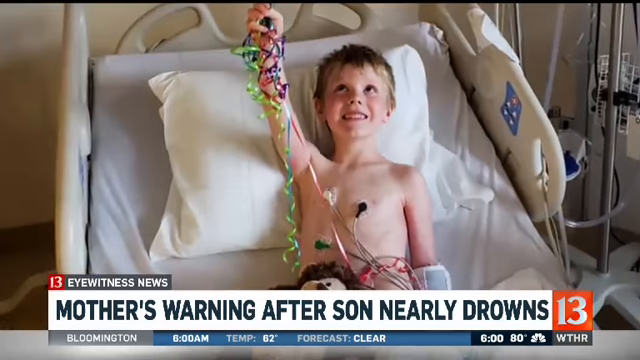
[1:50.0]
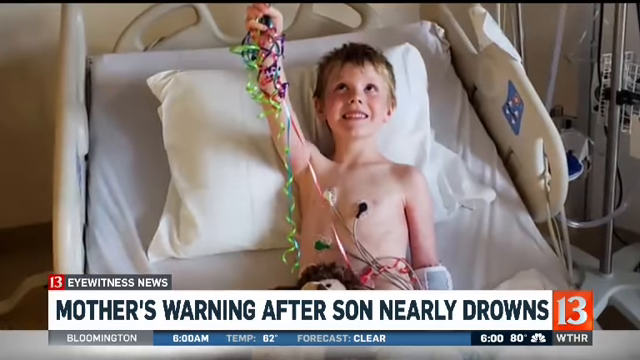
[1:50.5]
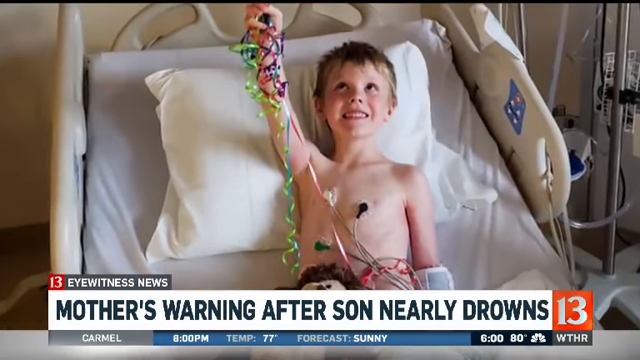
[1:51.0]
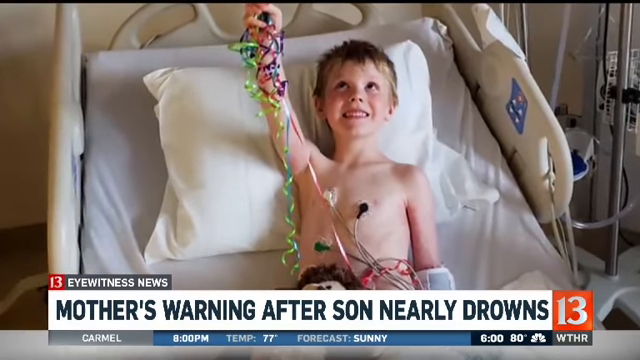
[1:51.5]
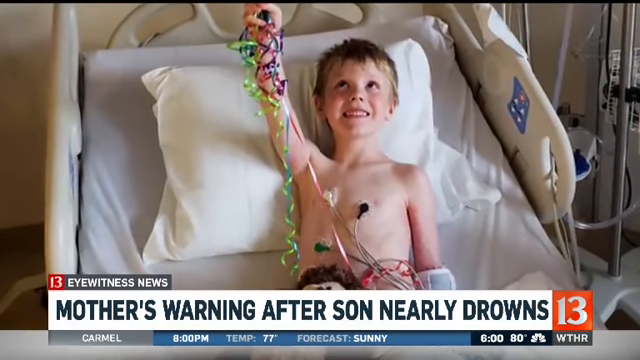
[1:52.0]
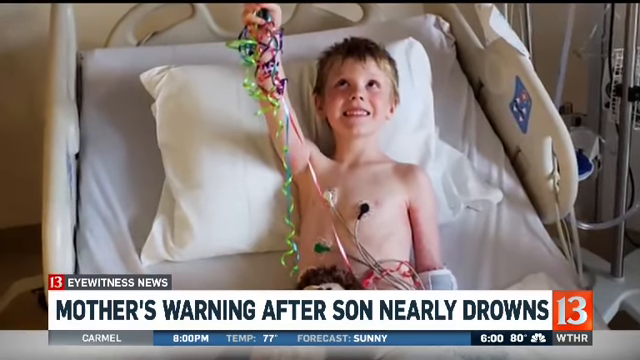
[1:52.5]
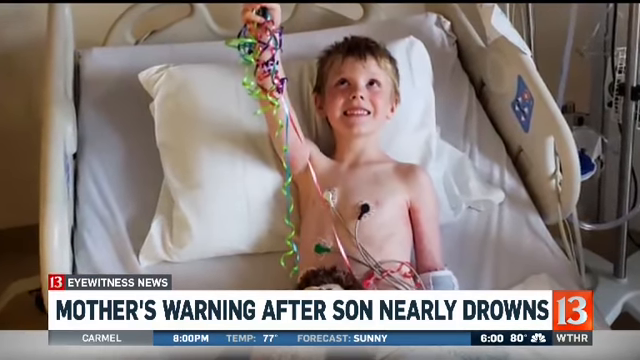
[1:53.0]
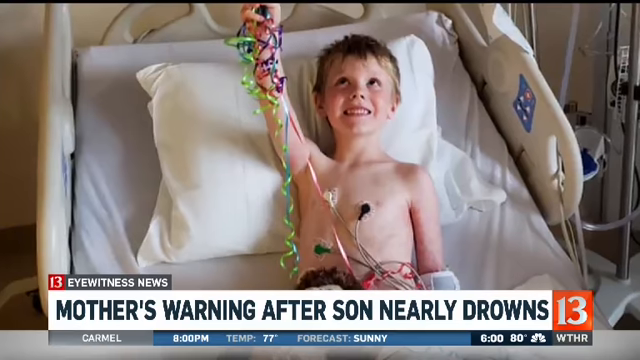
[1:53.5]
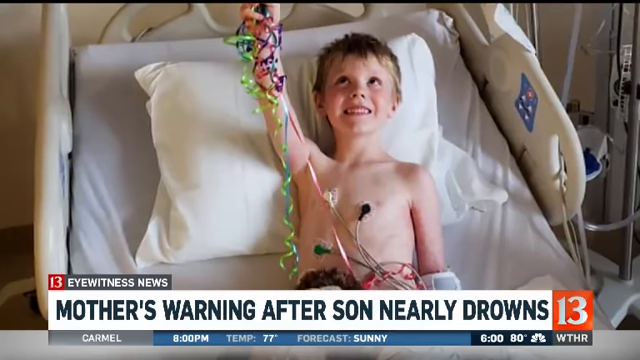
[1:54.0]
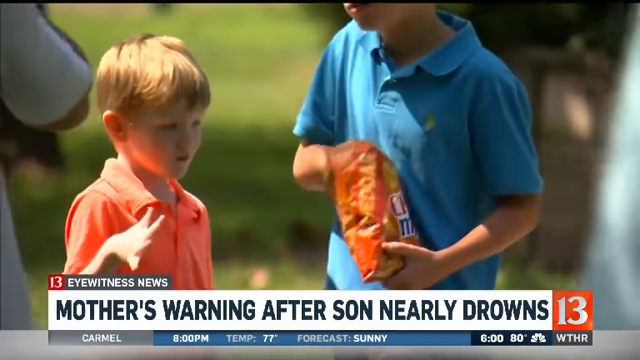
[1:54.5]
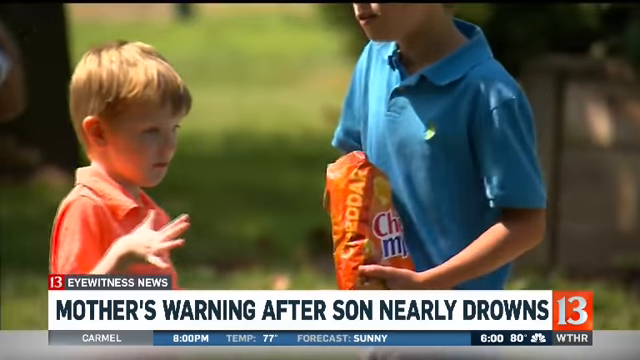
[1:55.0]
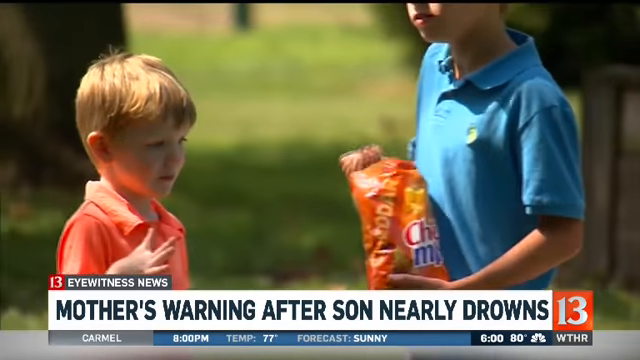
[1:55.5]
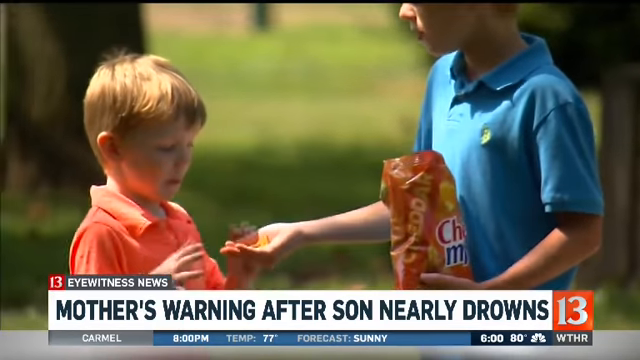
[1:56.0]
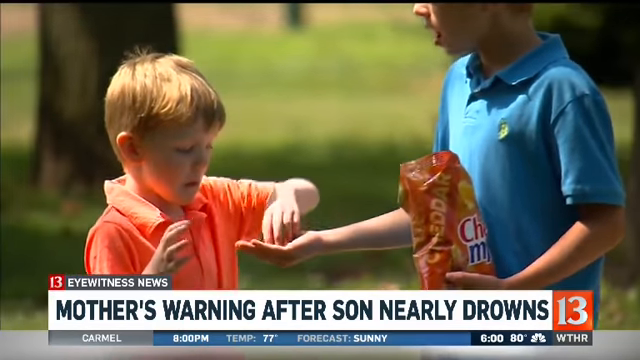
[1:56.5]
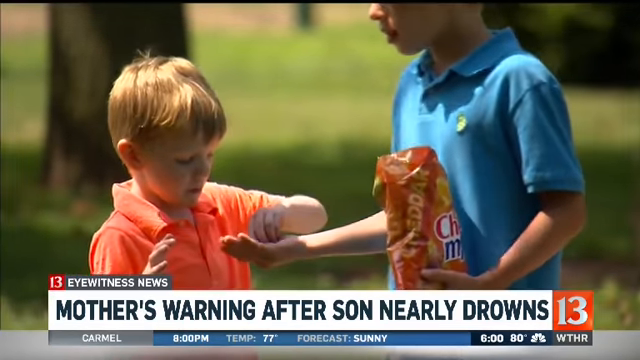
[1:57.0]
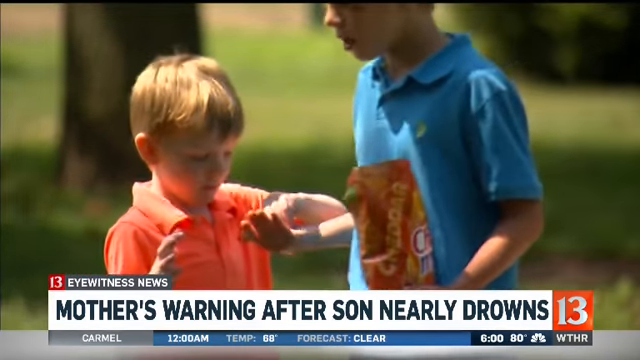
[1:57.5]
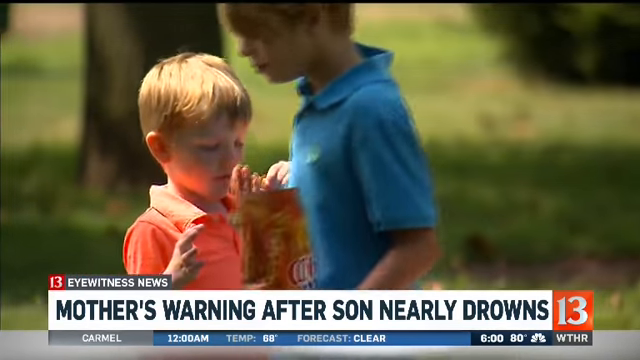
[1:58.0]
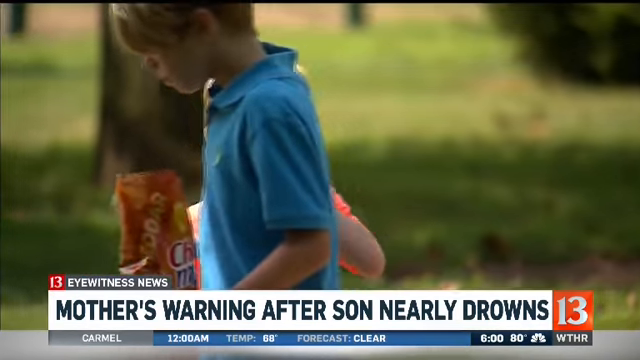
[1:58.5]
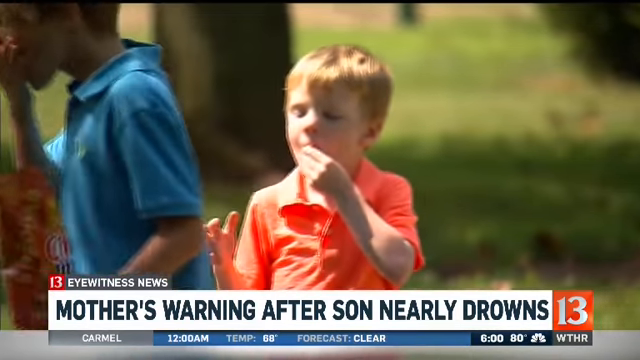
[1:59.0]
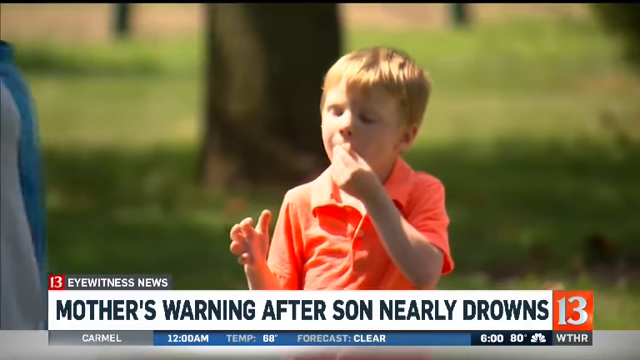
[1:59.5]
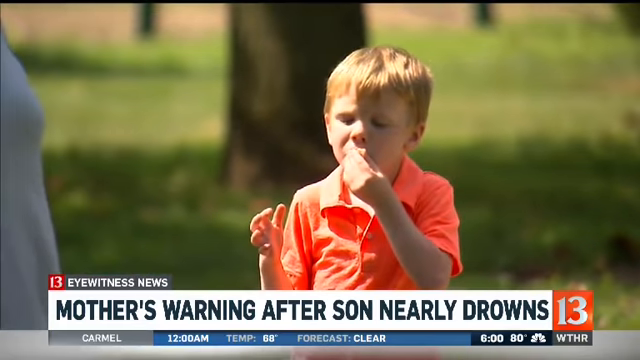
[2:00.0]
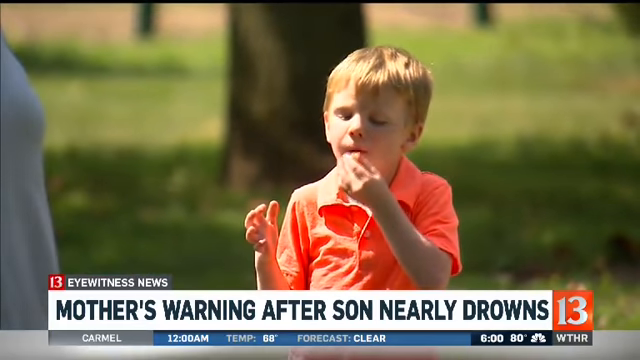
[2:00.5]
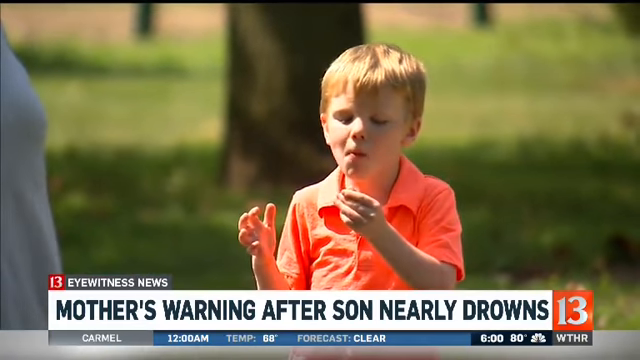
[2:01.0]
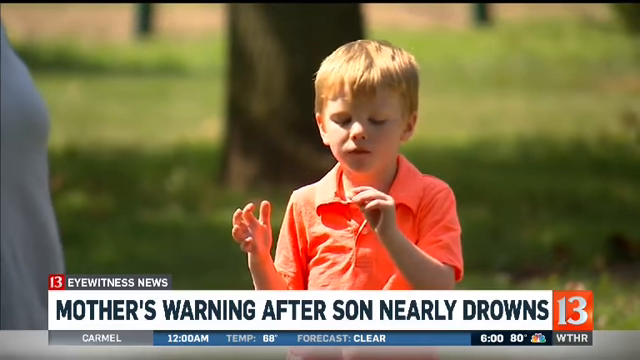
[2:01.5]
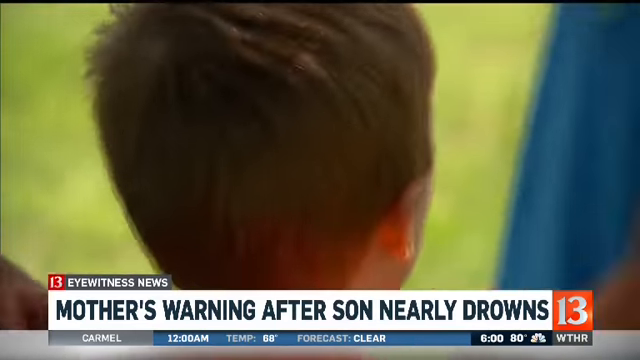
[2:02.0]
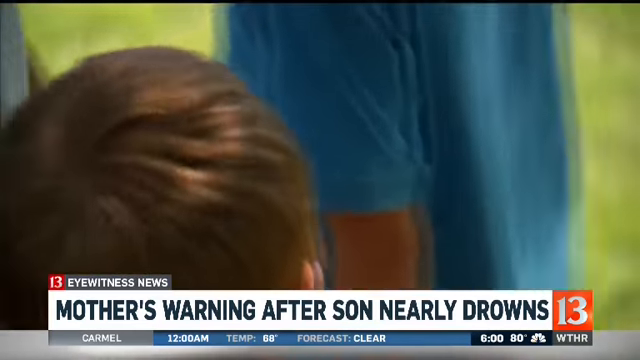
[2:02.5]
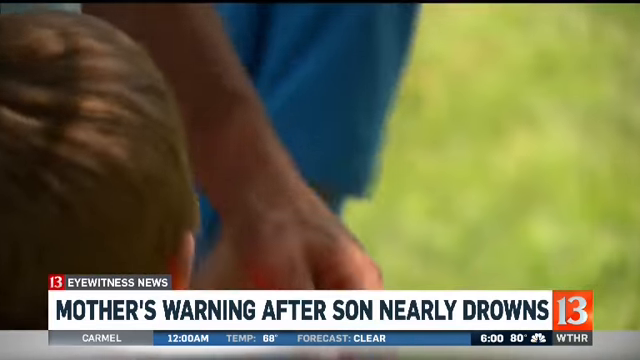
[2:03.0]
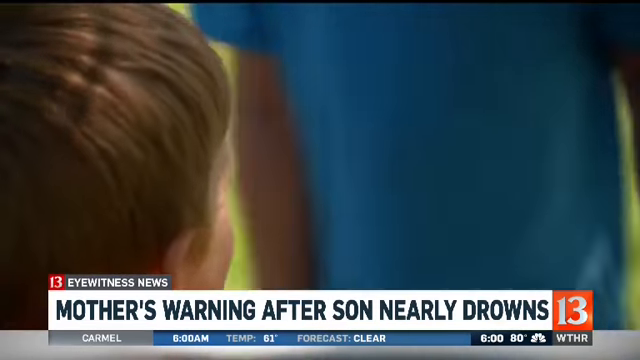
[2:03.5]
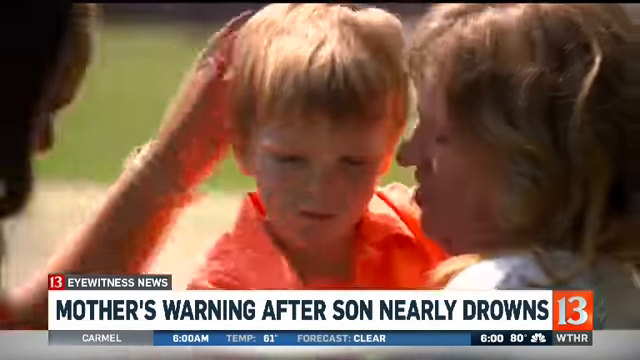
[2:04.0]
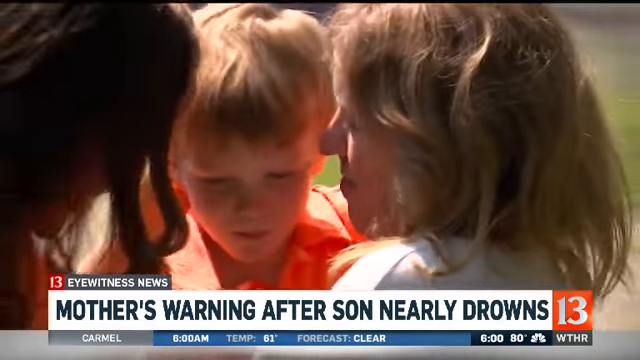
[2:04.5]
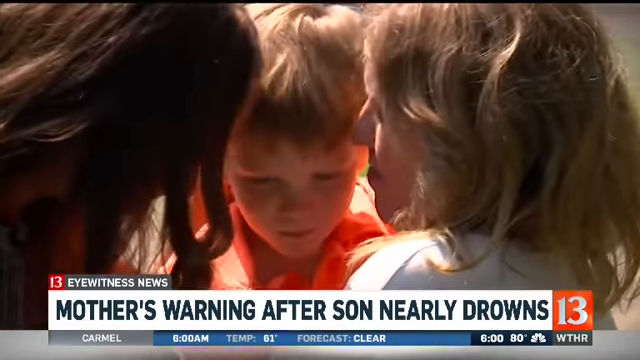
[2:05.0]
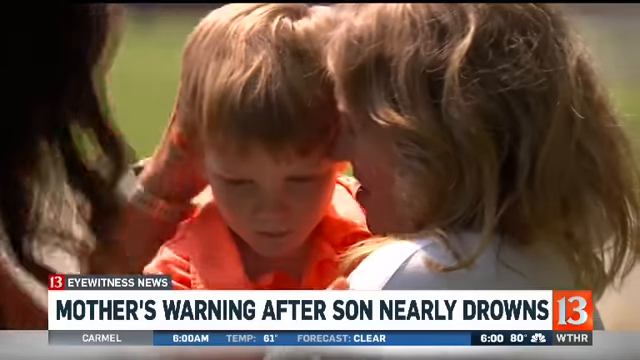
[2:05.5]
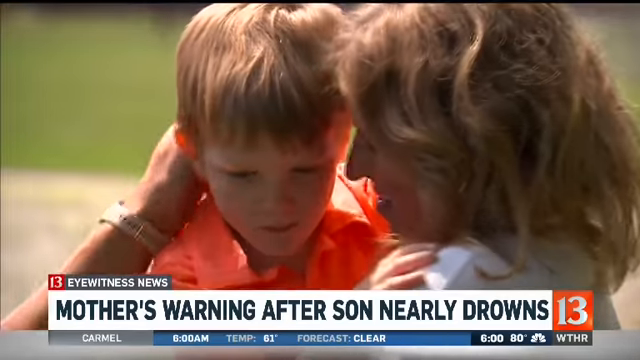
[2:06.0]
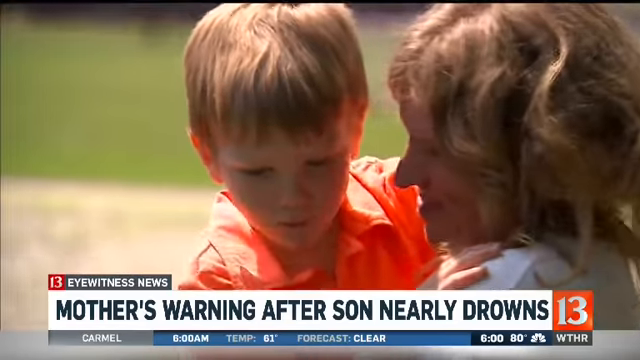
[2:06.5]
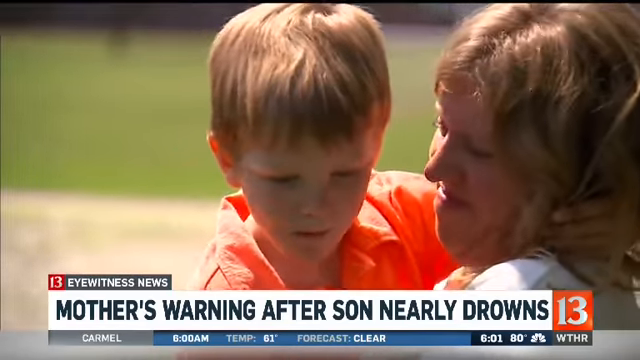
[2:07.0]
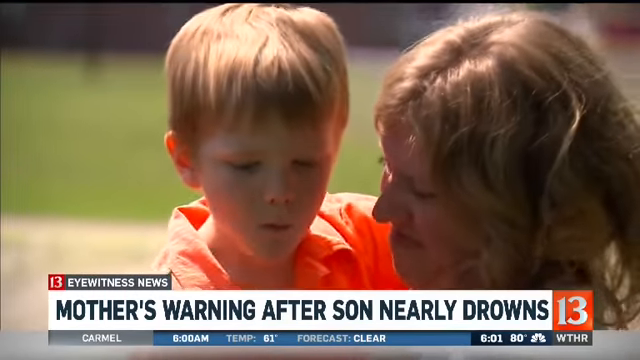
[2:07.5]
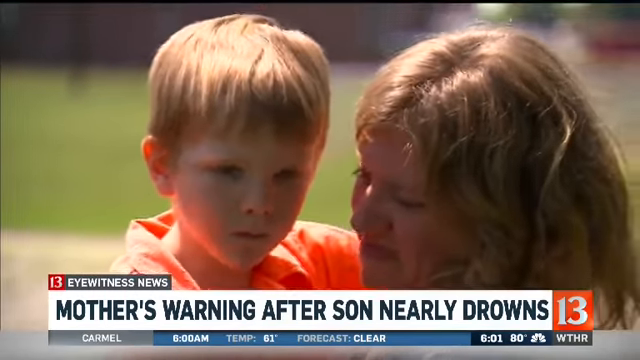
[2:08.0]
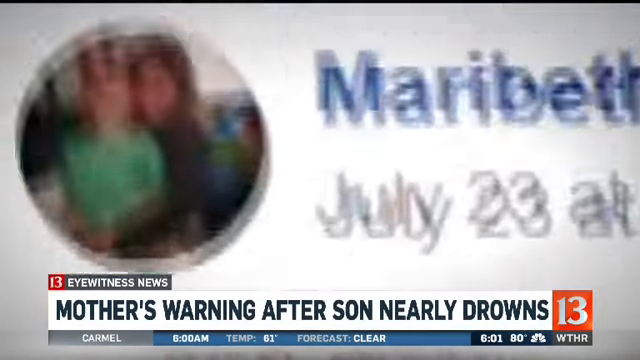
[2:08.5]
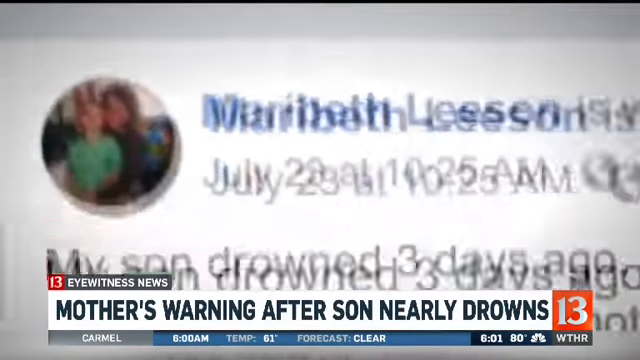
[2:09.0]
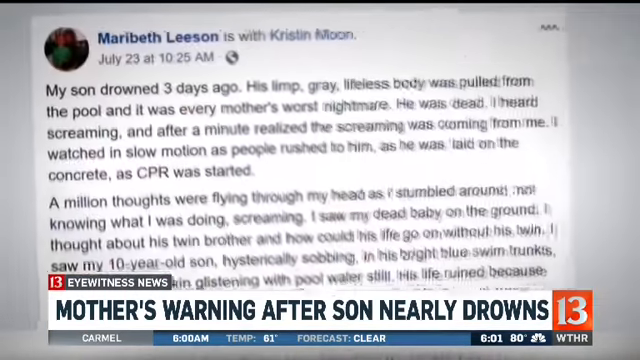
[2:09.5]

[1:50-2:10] An older boy lies in a hospital bed, shirtless, holding something like ribbons in the air. Text reads "channel 13 eyewitness news mother's warning after son nearly drowns." A little boy in an orange shirt plays outside with other kids, and then he is seen next to his mom. There is a lot of grass, sunlight and trees. Just before the shot ends, a post by the mom, Mary Beth, apparently on Facebook, appears: "My son drowned three days ago. His slumped, gray, lifeless body was pulled from the pool and it was every mother's worst nightmare. He was dead. I heard screaming and after a minute realized the screaming was coming from me. I watched in slow motion as people rushed to him and as he was laid on the concrete and CPR was started."